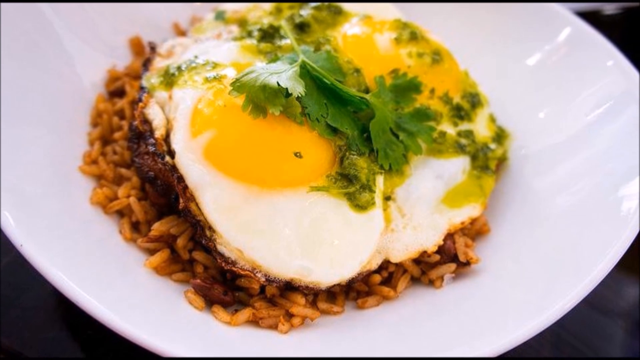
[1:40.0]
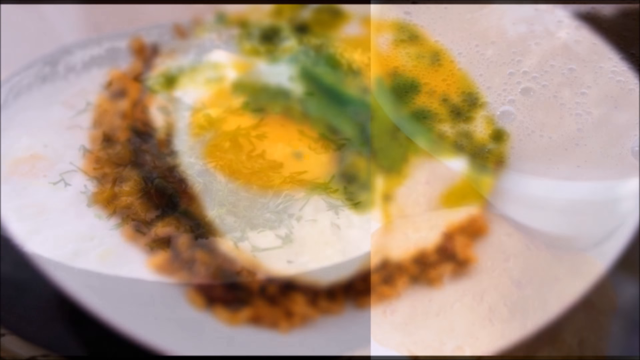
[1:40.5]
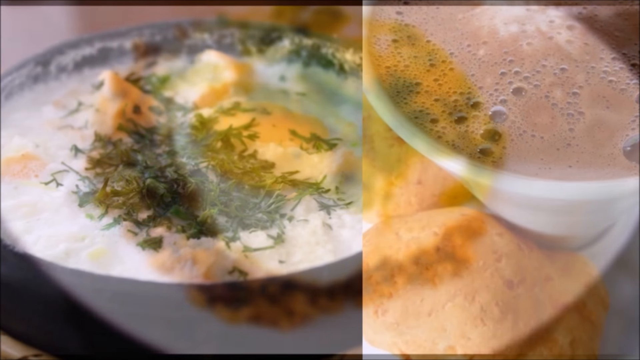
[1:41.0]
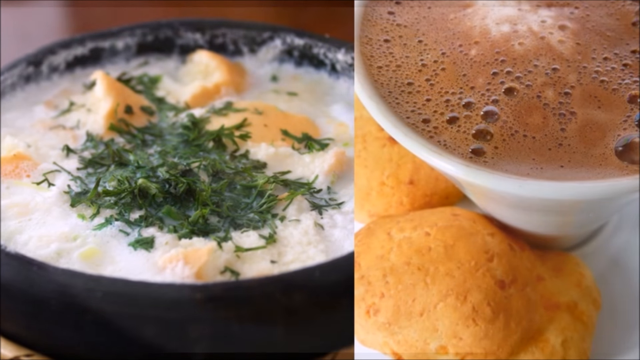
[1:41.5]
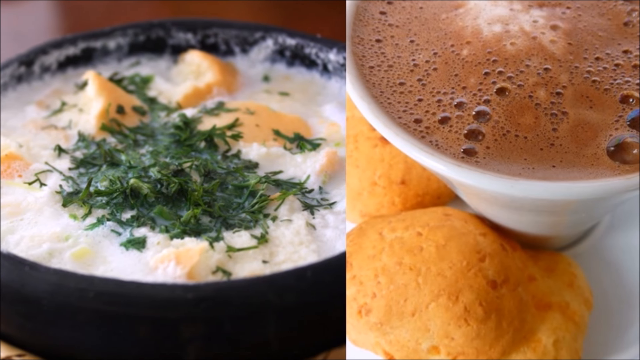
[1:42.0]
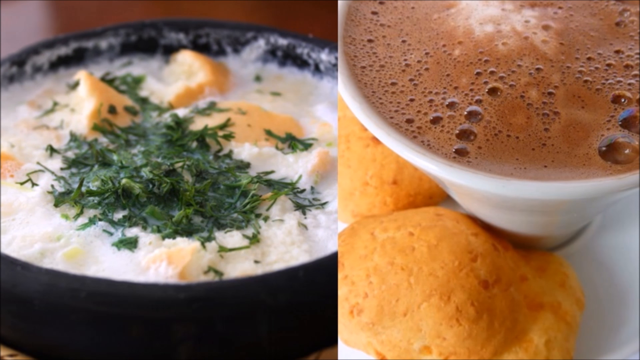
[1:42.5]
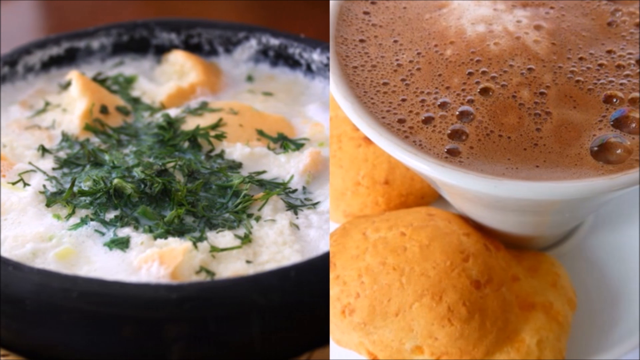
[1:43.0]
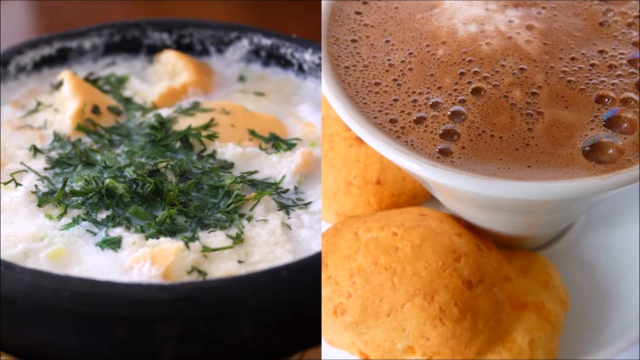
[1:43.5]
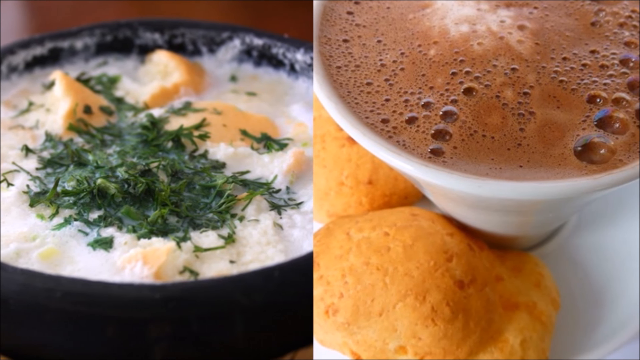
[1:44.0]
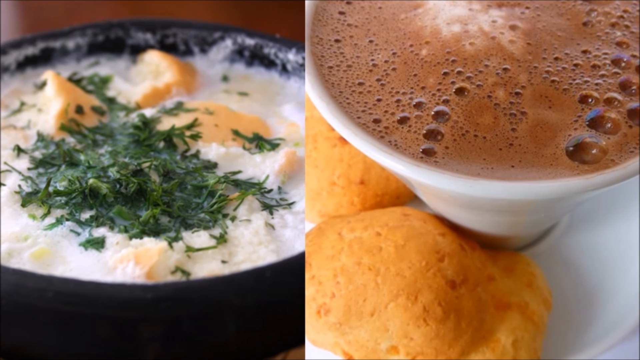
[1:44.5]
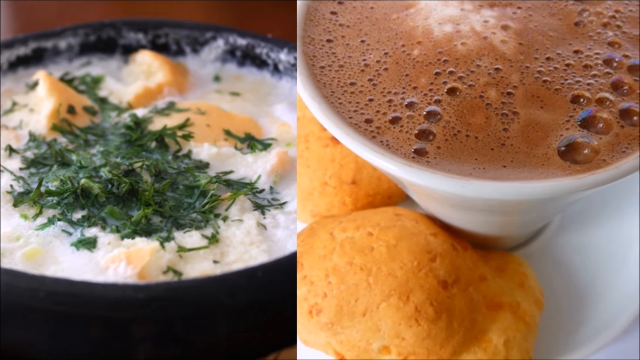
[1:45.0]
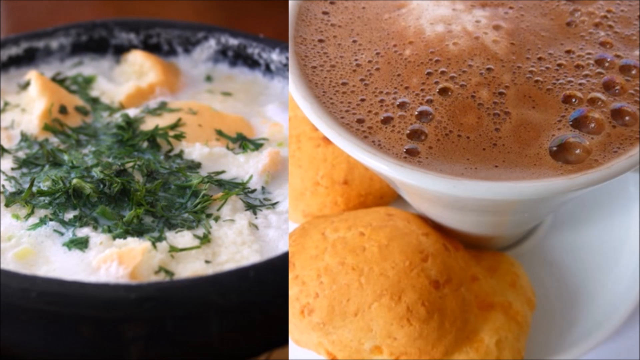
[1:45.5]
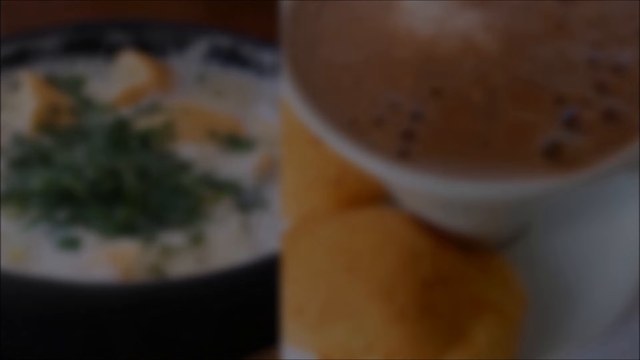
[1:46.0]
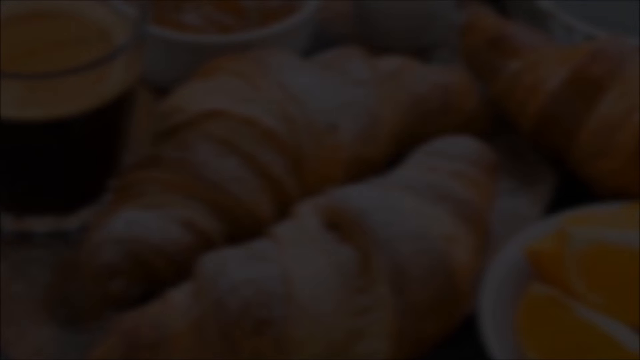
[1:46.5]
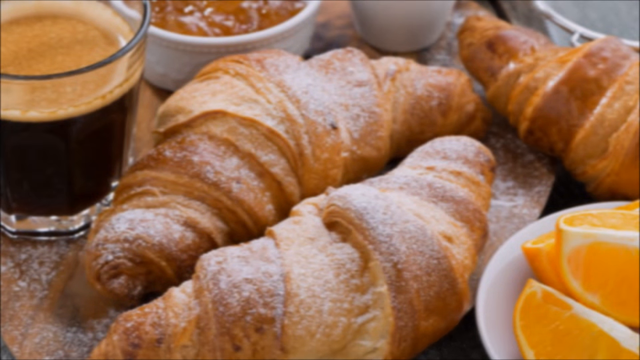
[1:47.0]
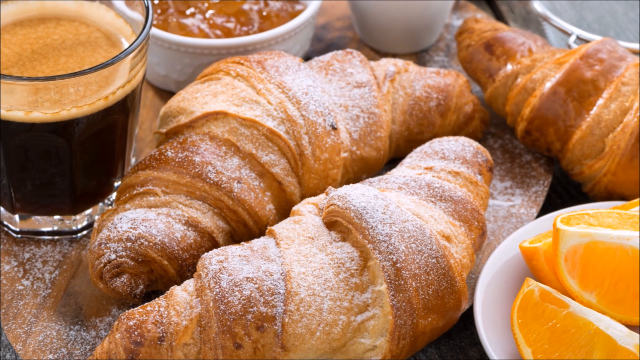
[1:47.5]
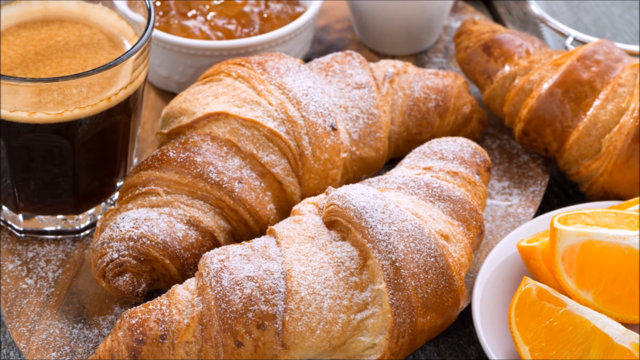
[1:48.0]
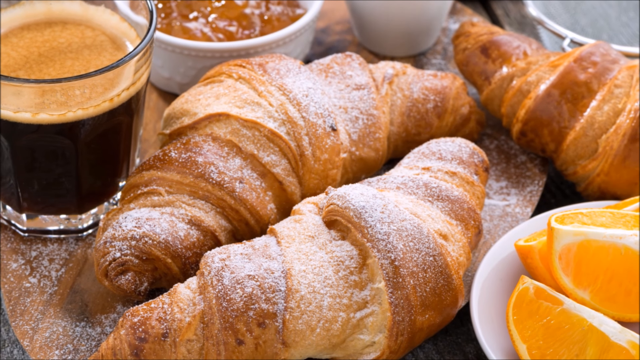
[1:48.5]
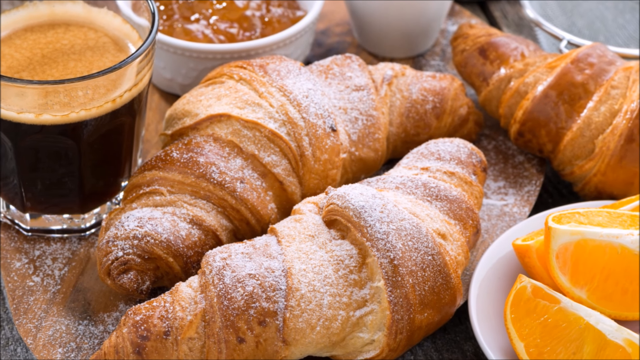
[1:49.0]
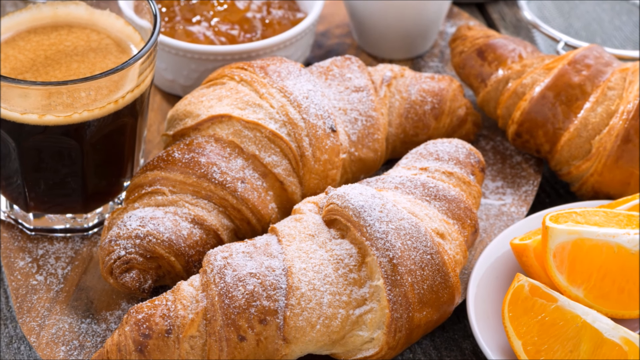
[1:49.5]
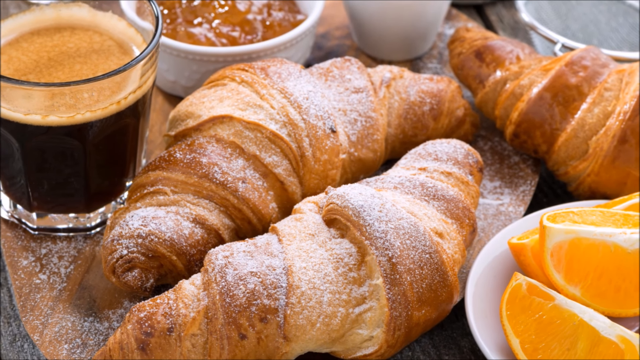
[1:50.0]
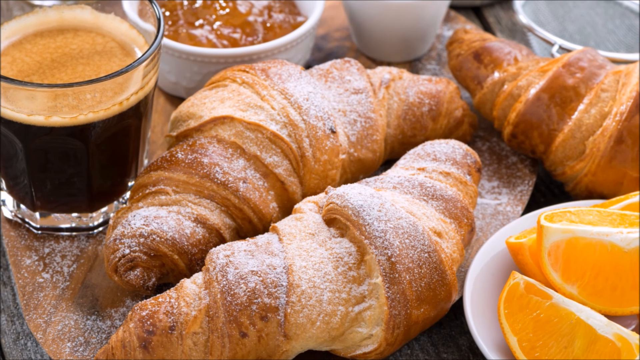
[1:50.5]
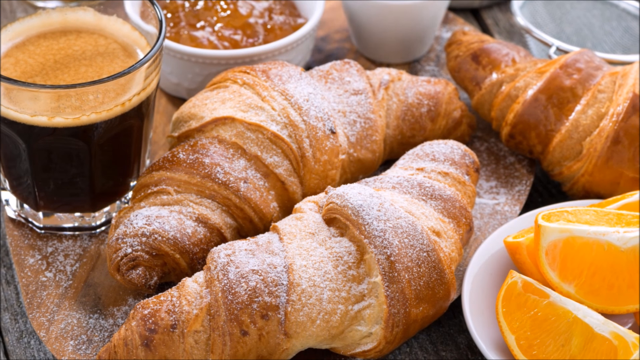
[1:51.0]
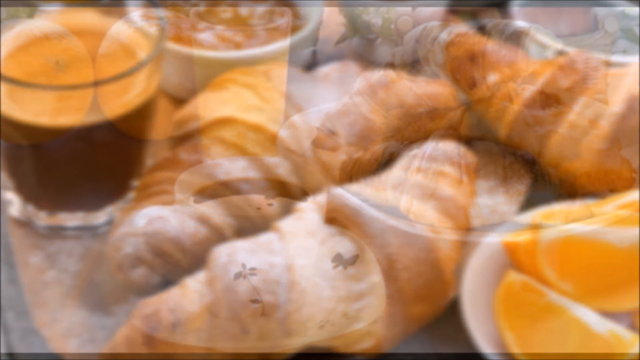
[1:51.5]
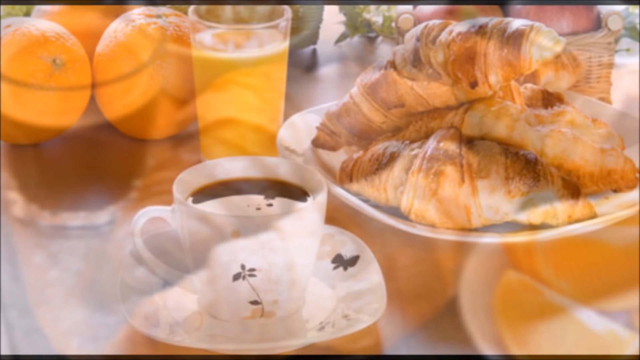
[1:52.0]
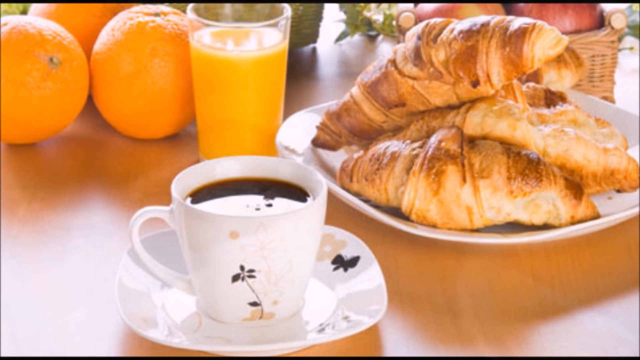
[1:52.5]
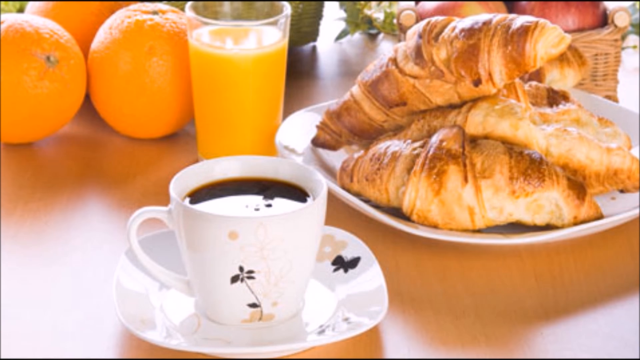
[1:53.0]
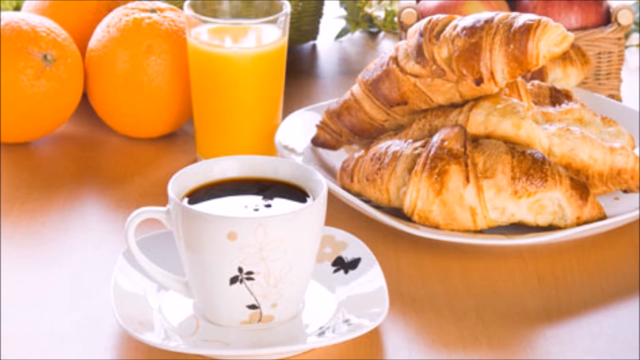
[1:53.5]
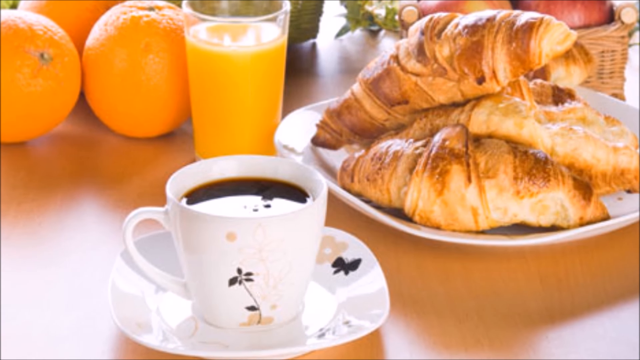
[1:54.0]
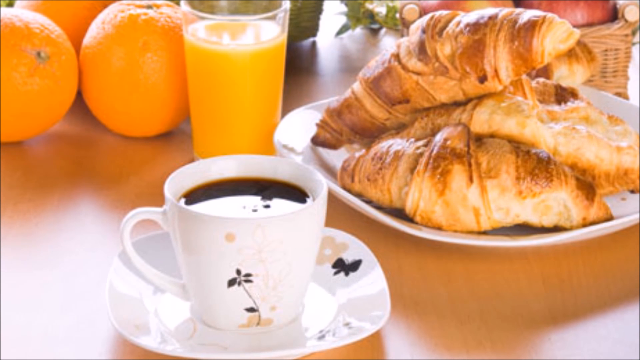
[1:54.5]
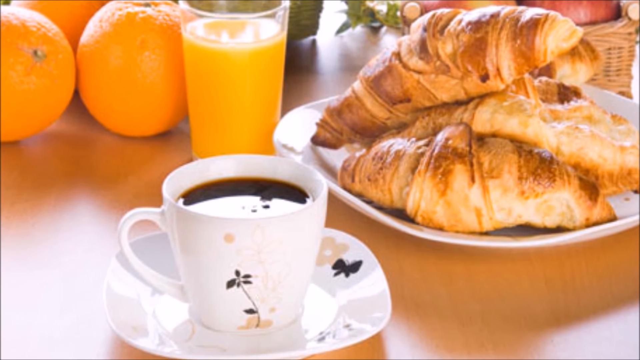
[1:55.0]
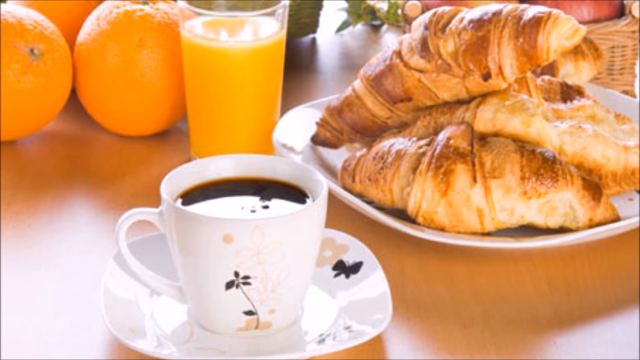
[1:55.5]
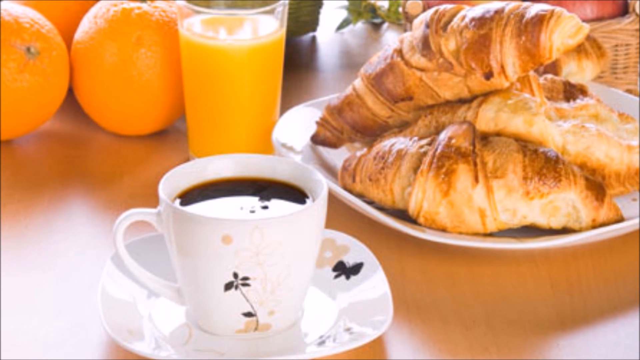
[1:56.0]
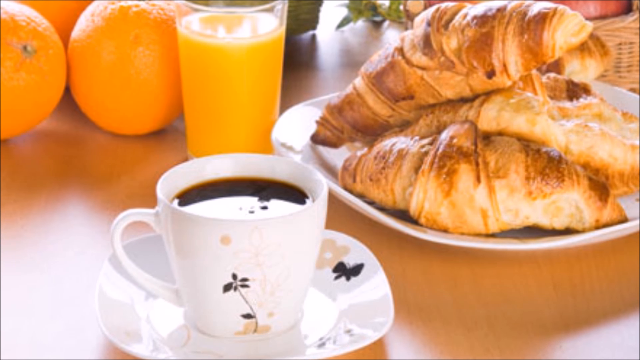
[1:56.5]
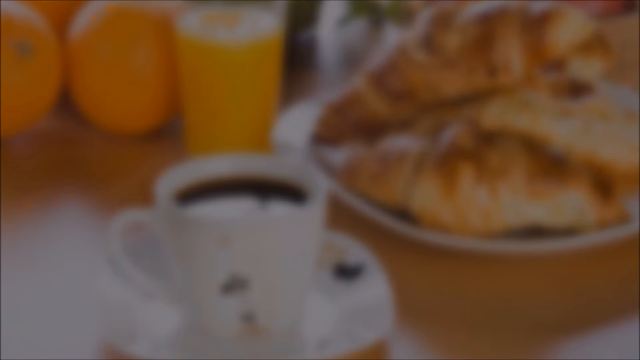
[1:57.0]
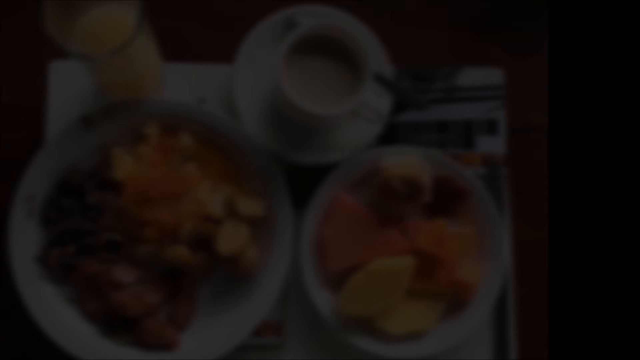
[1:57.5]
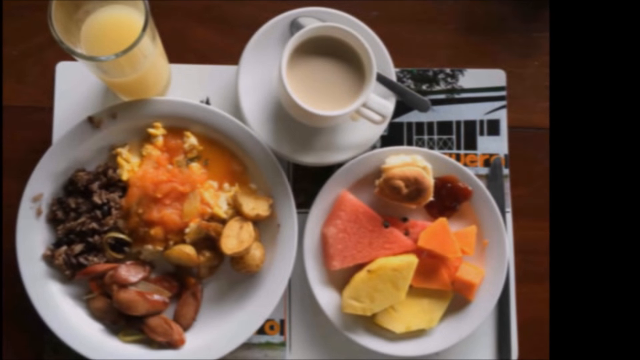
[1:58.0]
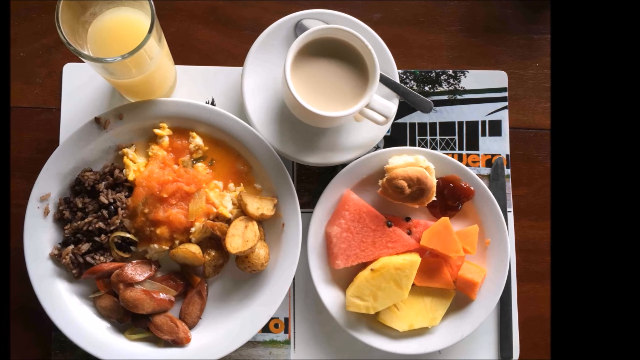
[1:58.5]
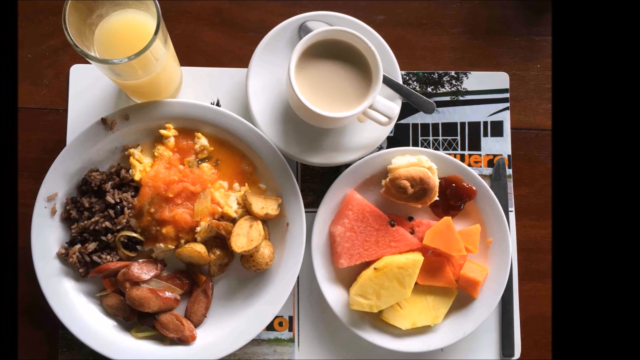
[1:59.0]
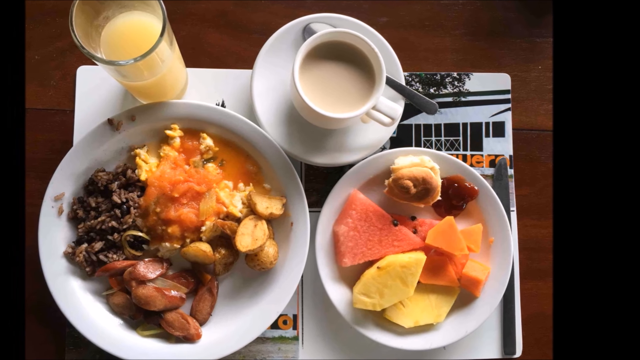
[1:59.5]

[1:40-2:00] A split image shows, on the left, clam chowder sprinkled with herbs and with pieces of bread sticking out of it, and on the right, a cup of coffee with bubbles and foam on top and two muffins to its bottom right. Both images pan to the right and fade to black. An image fades in of two croissants in the middle and one on the right side, sprinkled with powdered sugar. At the bottom right is a white plate with oranges on it, to the left of the croissants is a glass cup of coffee, and above the croissants is a ramekin filled with marmalade. This fades to an image of a simple floral coffee cup with a beige and black floral pattern, filled with coffee, on a saucer with a simple butterfly pattern. At the upper right is a square plate with four croissants piled on it; to its left is a glass of orange juice, and to the left of that are three oranges in the back. The view zooms in on the coffee cup, and then another breakfast appears.